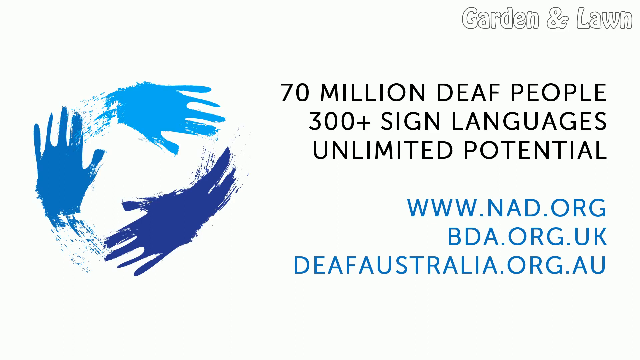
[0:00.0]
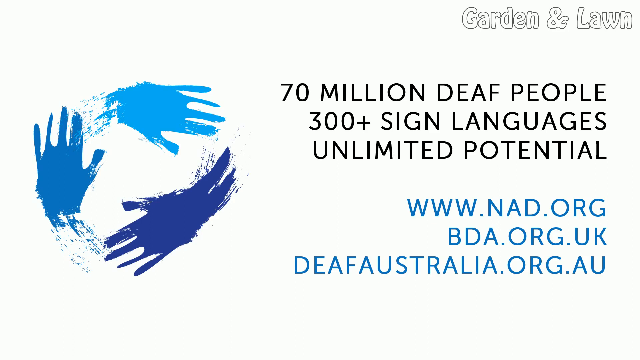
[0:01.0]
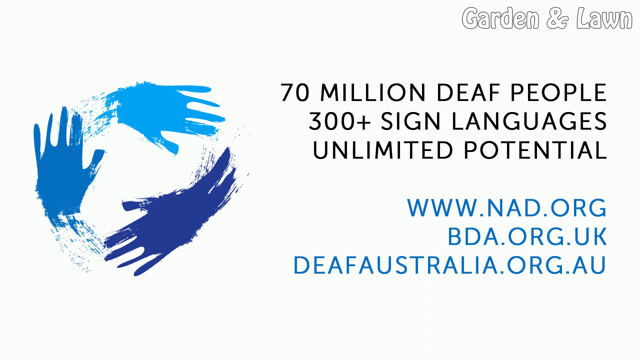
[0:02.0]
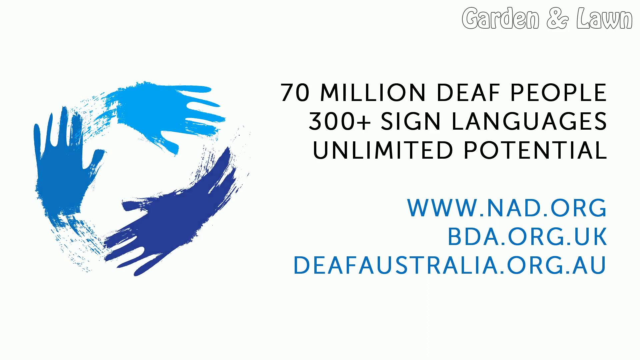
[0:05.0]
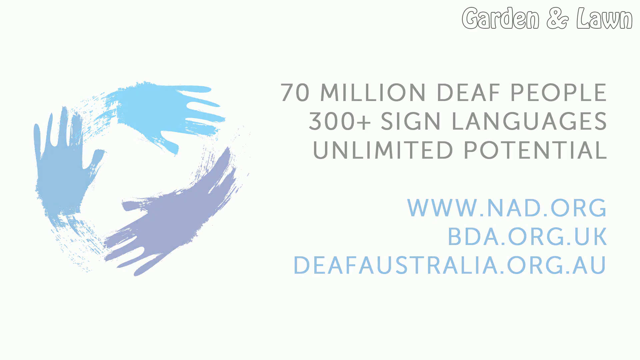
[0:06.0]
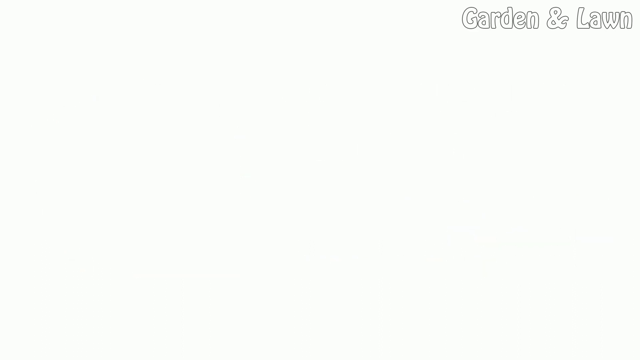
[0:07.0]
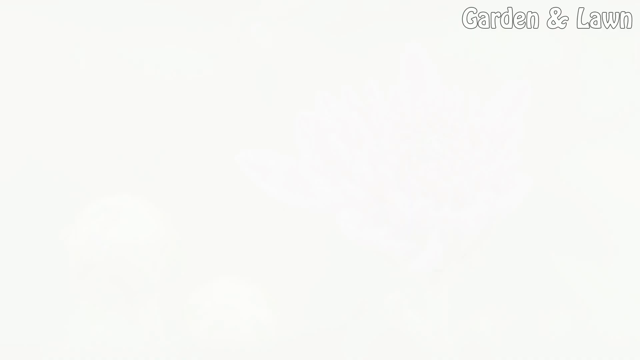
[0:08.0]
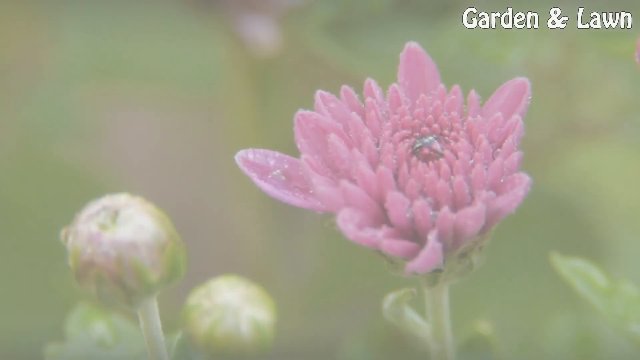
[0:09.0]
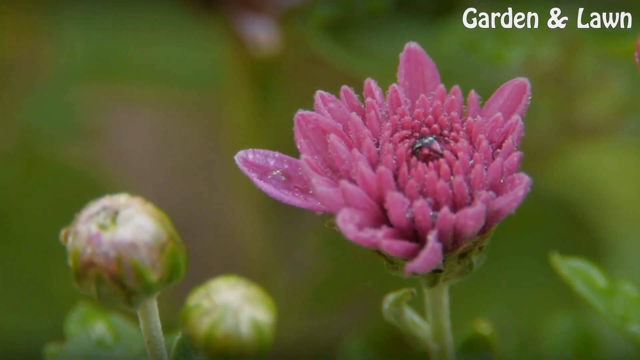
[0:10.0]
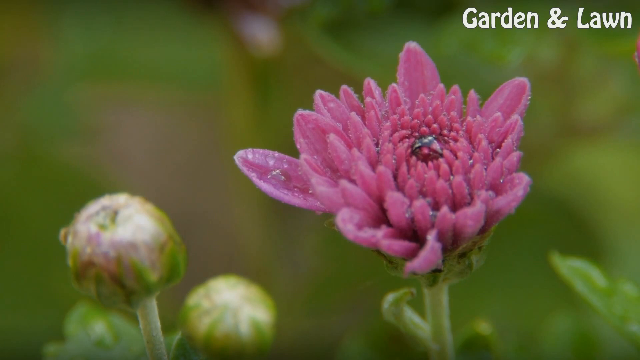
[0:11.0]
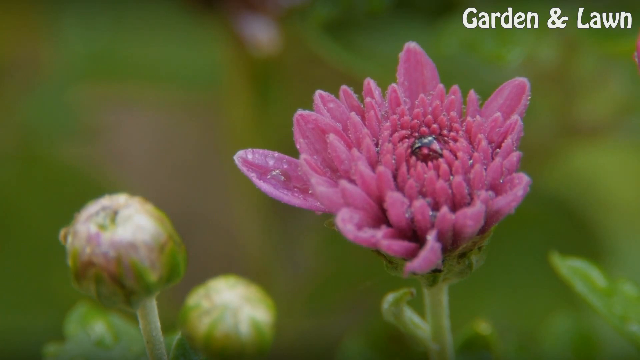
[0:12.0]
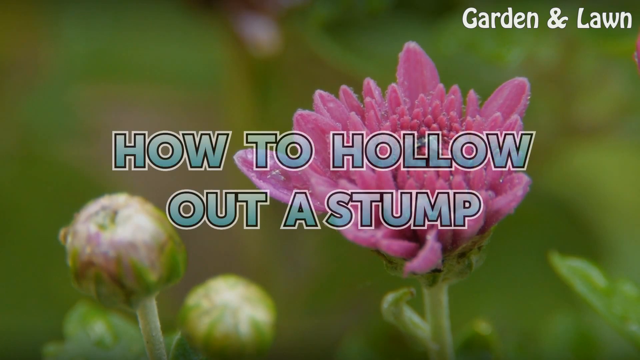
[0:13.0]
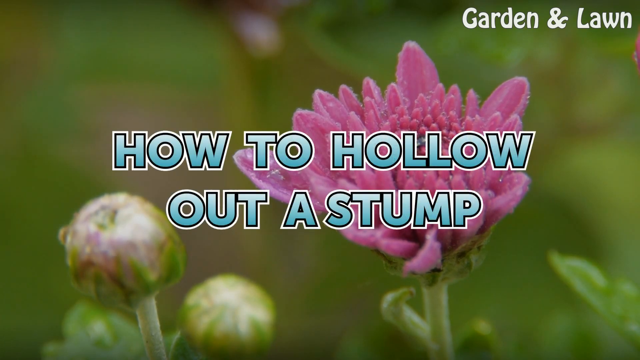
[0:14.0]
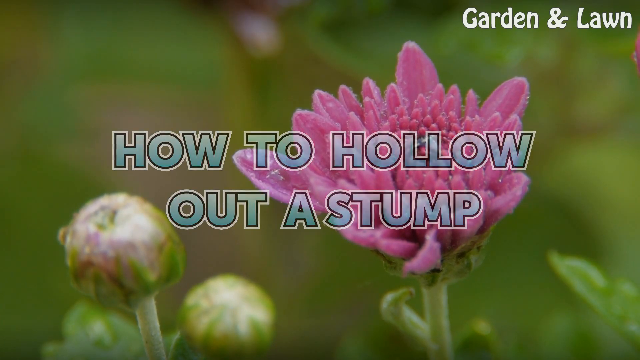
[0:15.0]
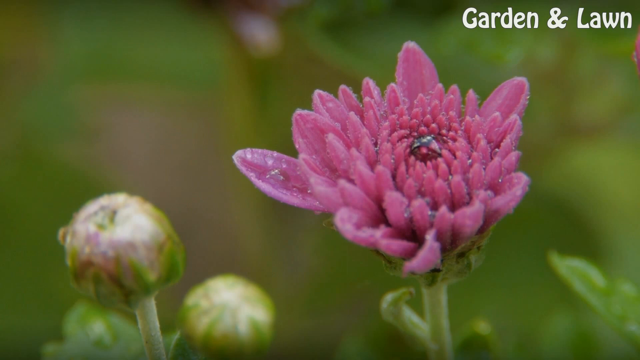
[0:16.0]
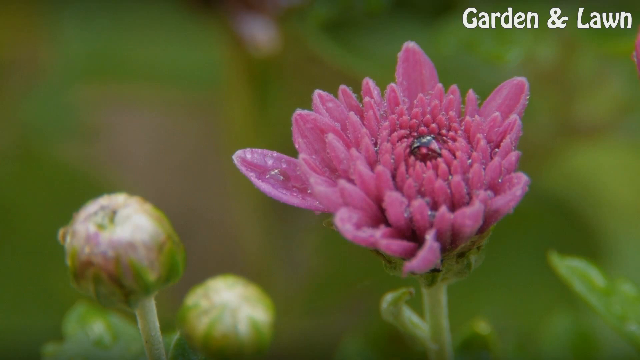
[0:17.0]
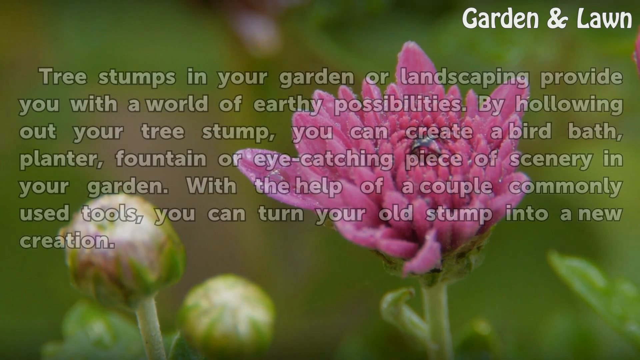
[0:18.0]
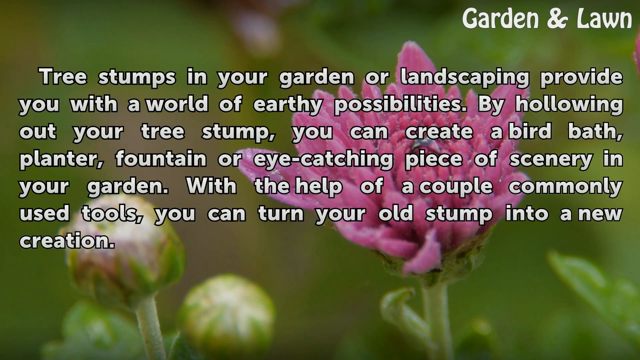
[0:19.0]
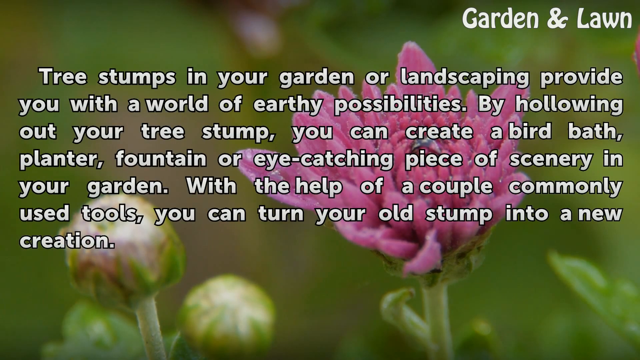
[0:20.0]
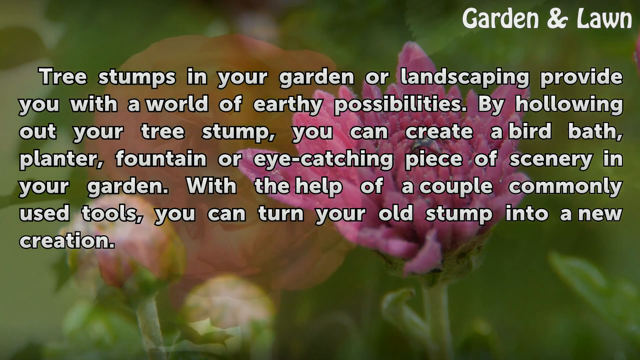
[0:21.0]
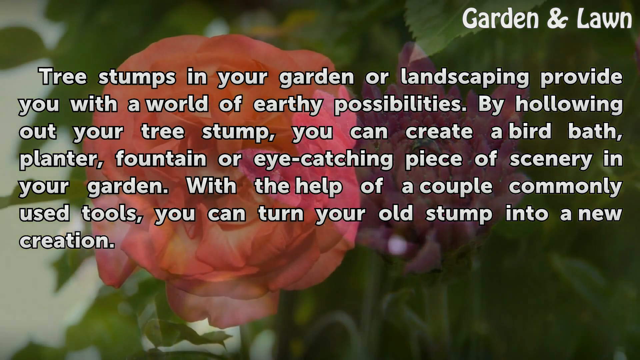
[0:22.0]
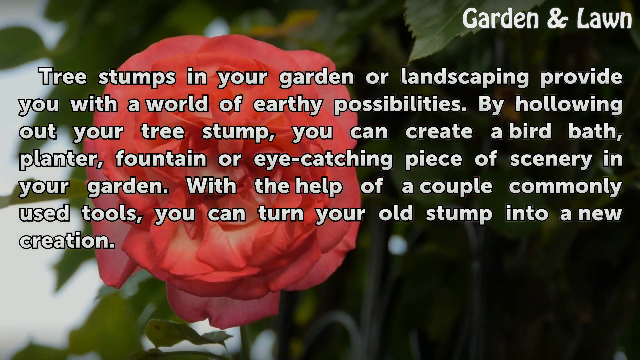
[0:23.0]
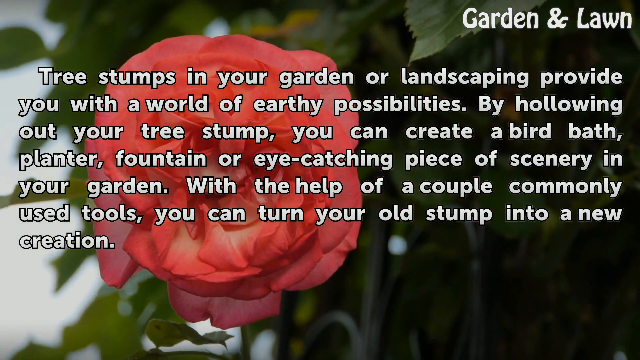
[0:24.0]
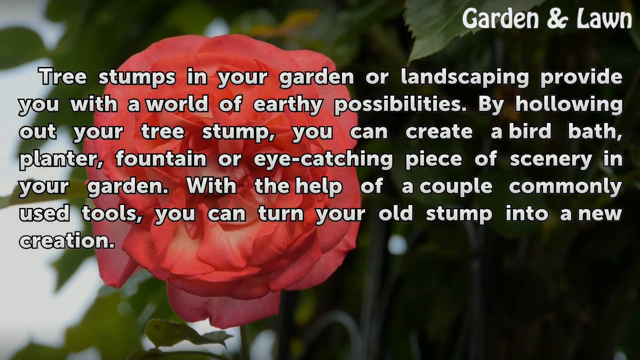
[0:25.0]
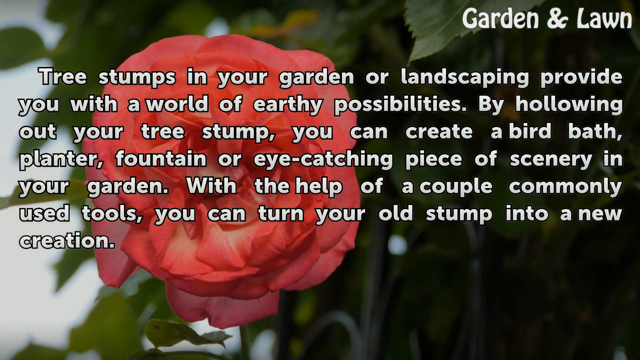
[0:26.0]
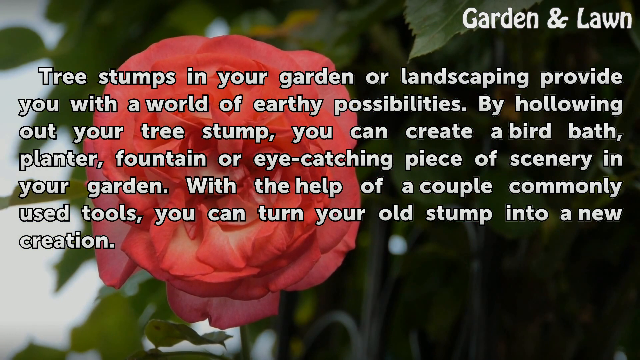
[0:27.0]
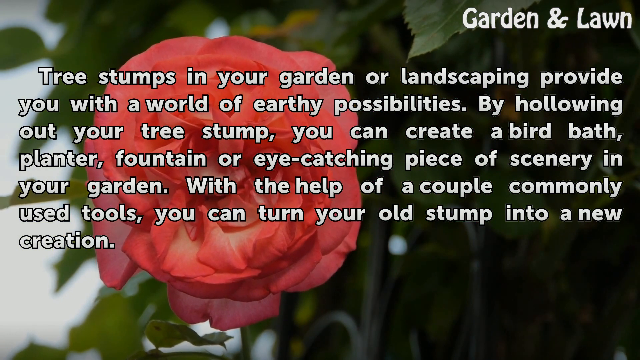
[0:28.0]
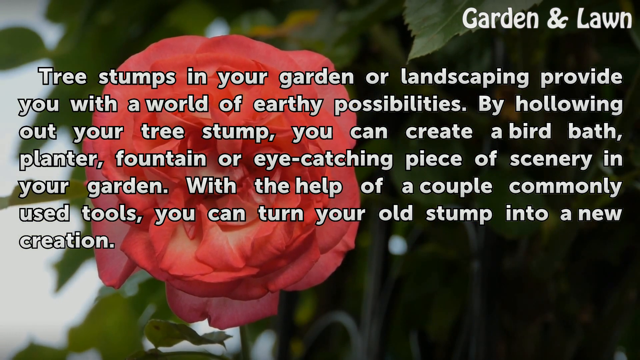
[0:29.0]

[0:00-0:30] Two blue hands and a purple hand form a circle on the left side of the screen, while text on the right reads "70 million deaf people, 300 plus sign languages, unlimited potential" along with three web addresses: nad.org, bda.org, and deafaustralia.org. This quickly disappears and fades away, and flowers appear. A picture of a purple flower with kind of fuzzy-looking leaves is shown with the on-screen message "how to hollow out a stump." Text then reads "tree stumps in the garden or your landscape provide you with a world of earthly possibilities," explaining that by hollowing out a tree stump, a birdbath, a planter, a fountain, or an eye-catching piece of scenery can be created in the garden with a couple of commonly used tools, turning an old stump into a new creation.